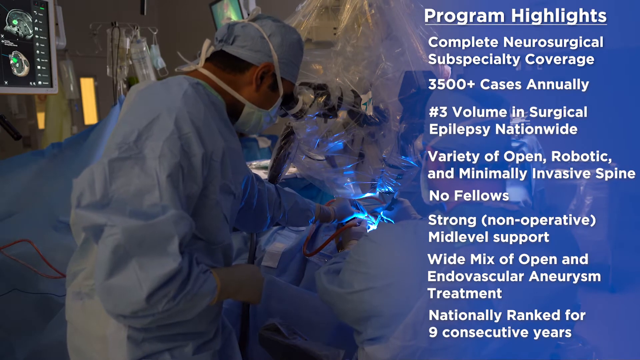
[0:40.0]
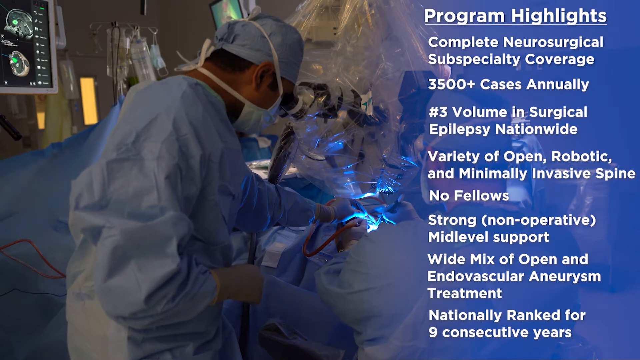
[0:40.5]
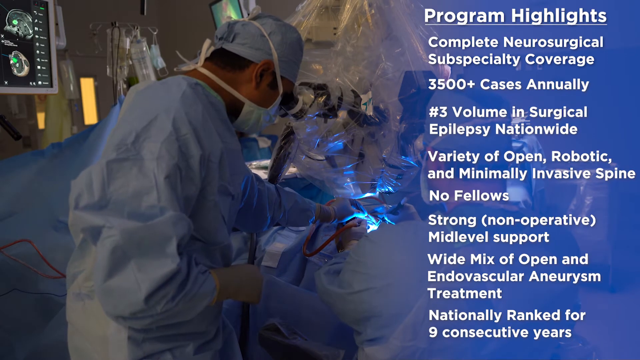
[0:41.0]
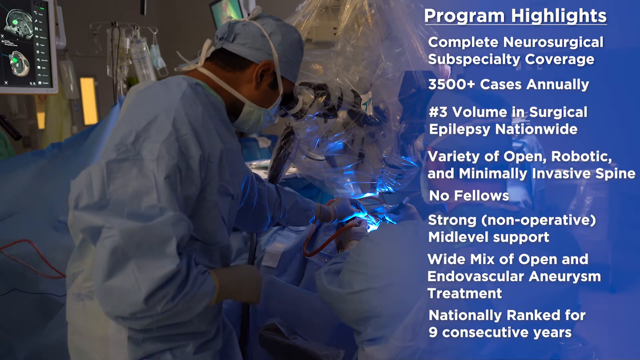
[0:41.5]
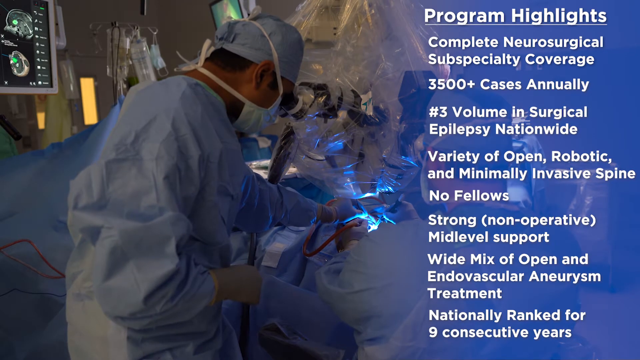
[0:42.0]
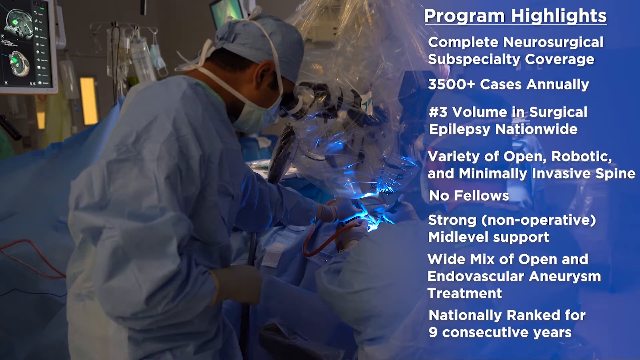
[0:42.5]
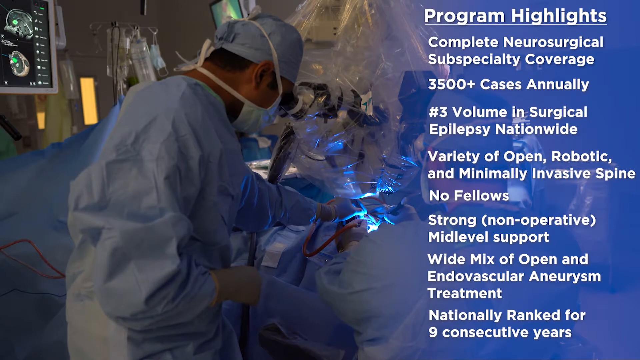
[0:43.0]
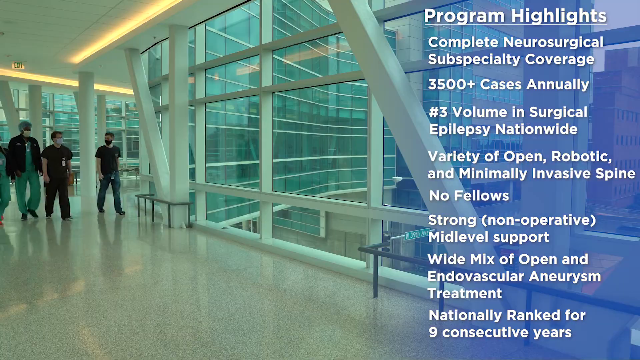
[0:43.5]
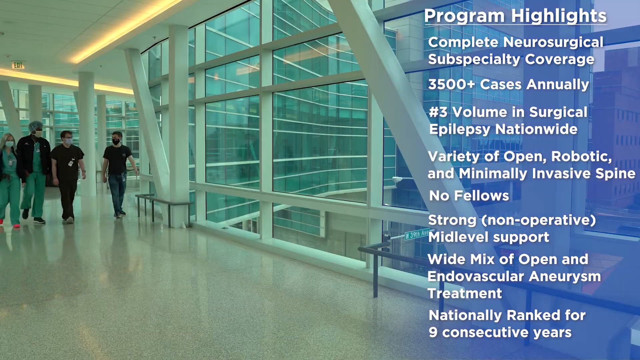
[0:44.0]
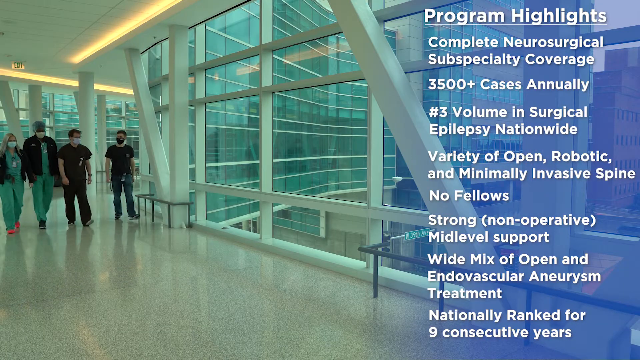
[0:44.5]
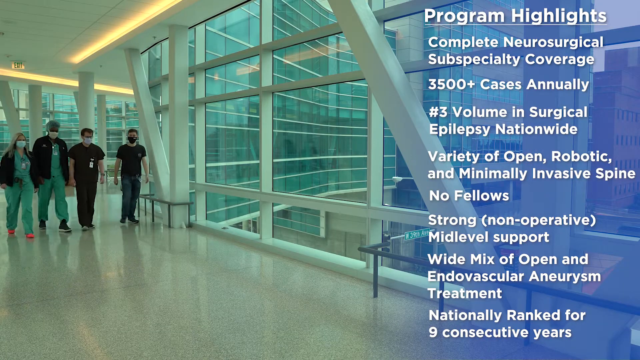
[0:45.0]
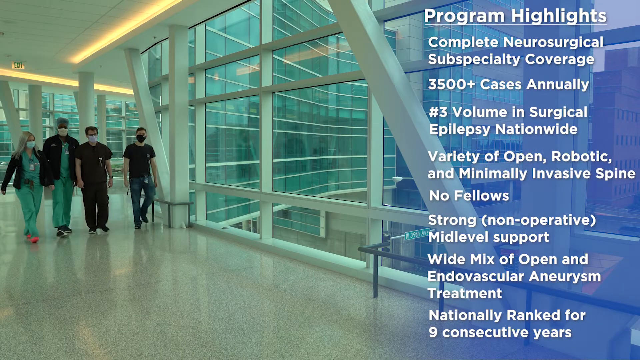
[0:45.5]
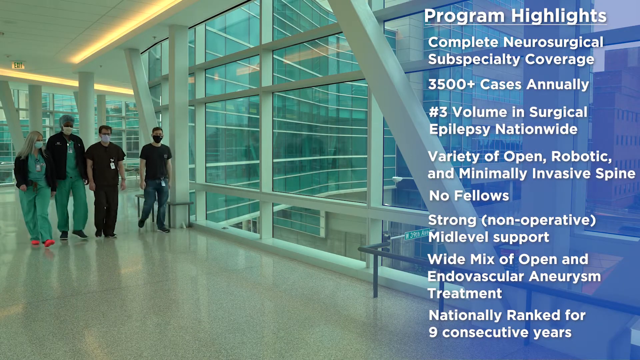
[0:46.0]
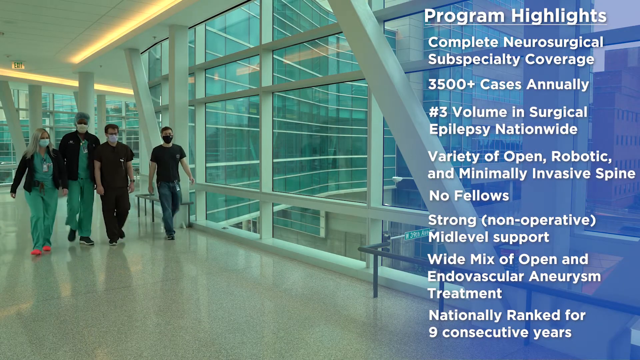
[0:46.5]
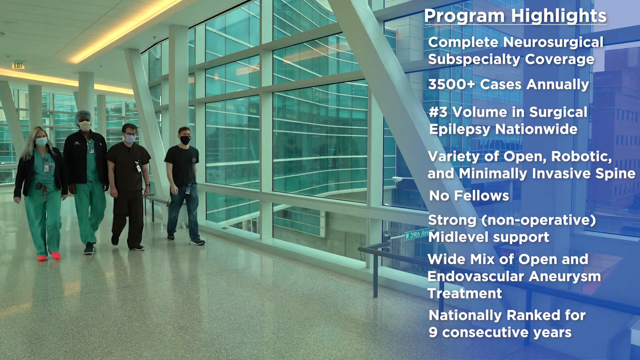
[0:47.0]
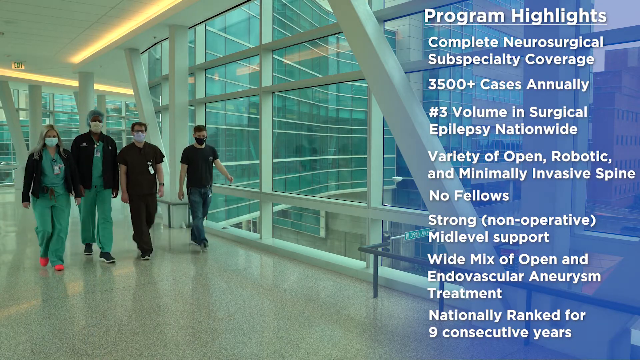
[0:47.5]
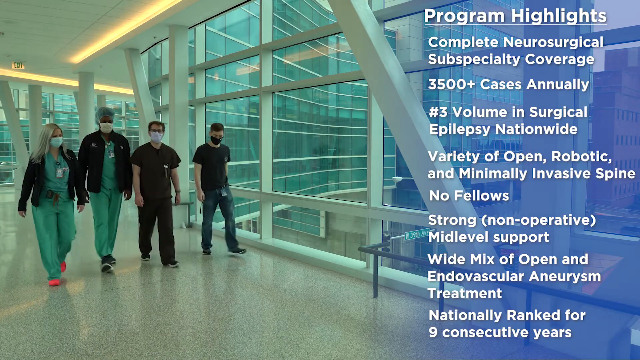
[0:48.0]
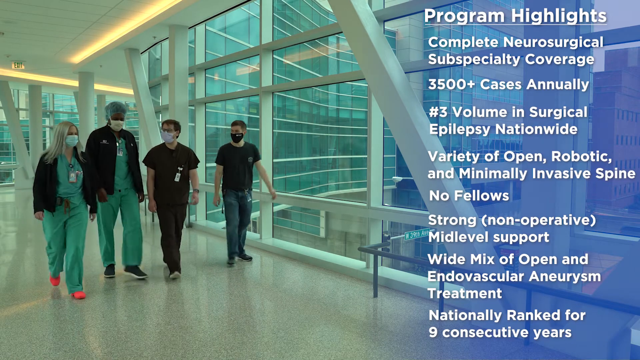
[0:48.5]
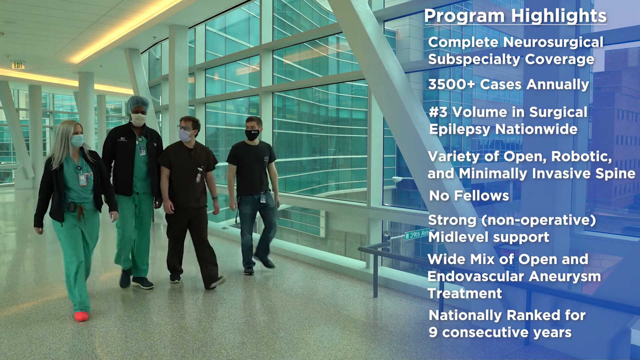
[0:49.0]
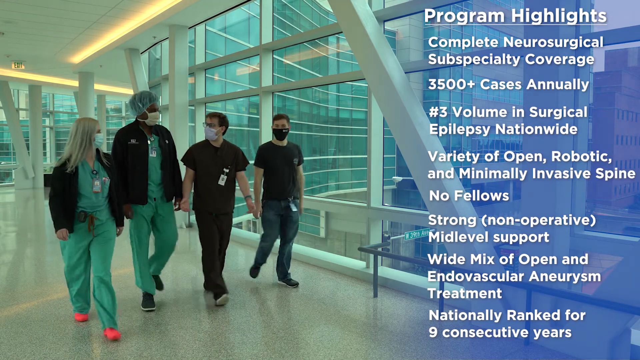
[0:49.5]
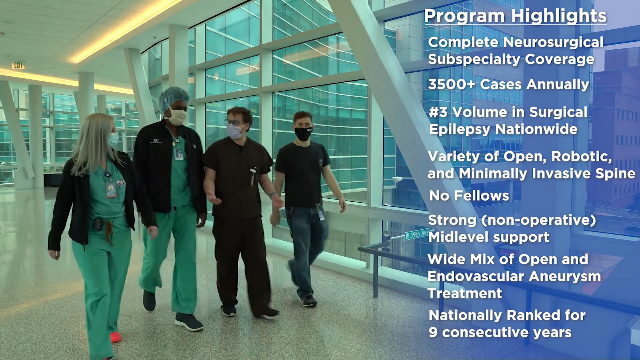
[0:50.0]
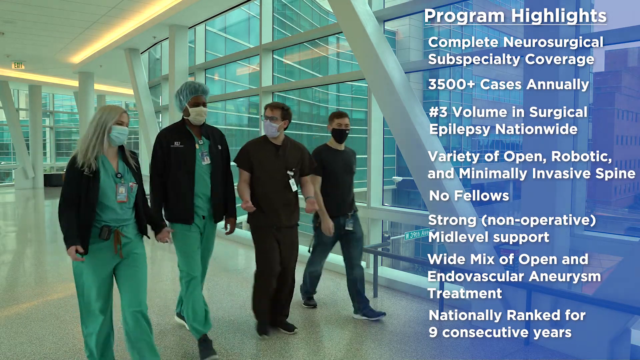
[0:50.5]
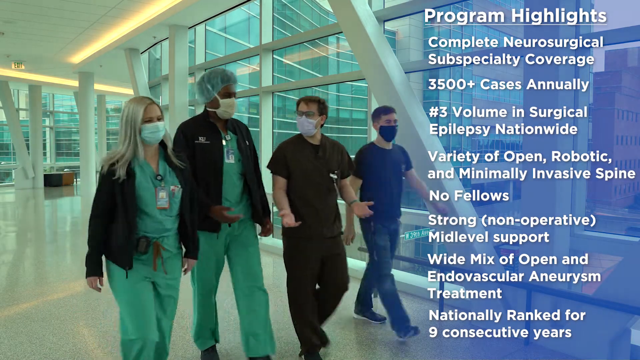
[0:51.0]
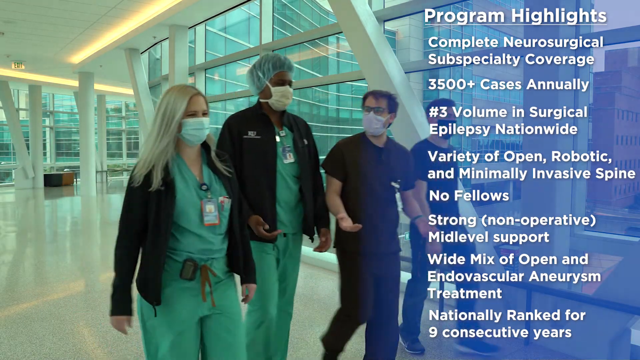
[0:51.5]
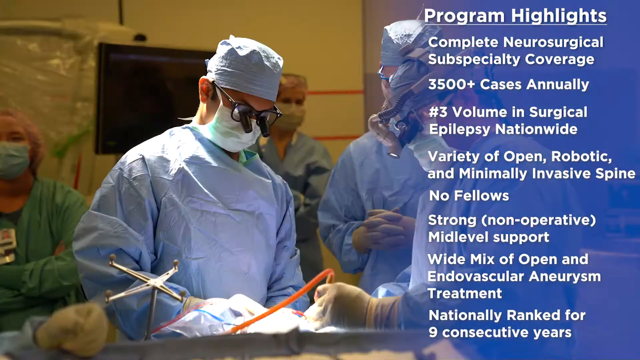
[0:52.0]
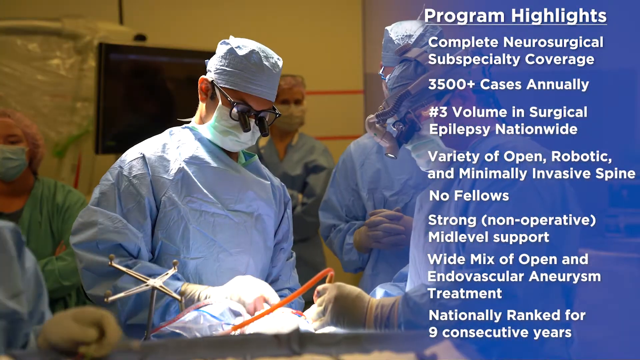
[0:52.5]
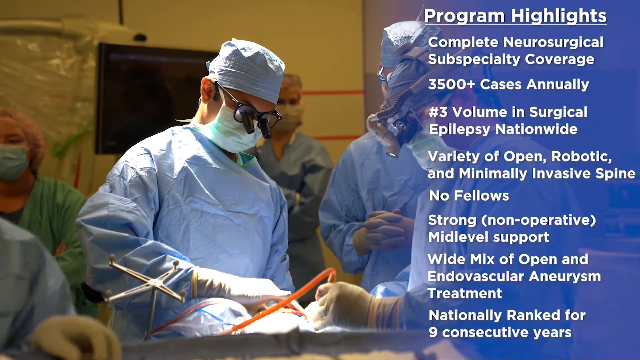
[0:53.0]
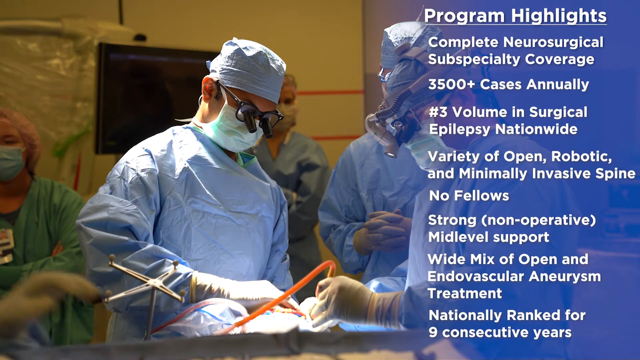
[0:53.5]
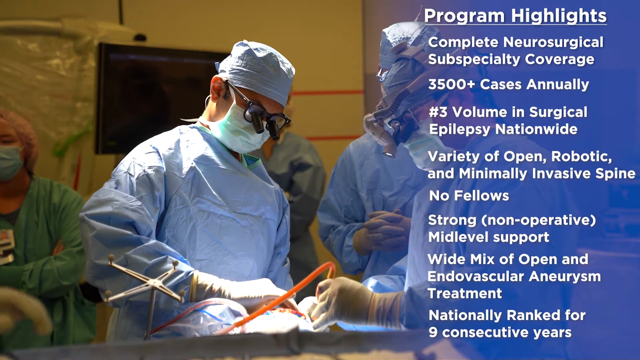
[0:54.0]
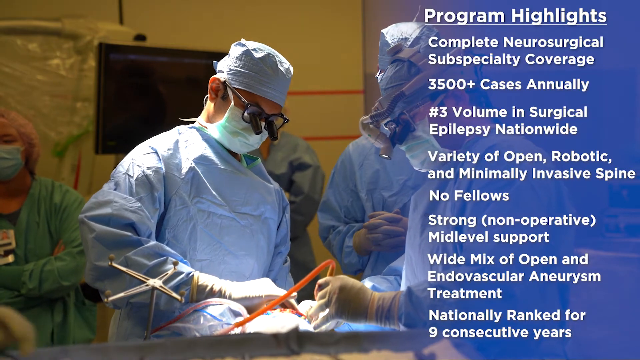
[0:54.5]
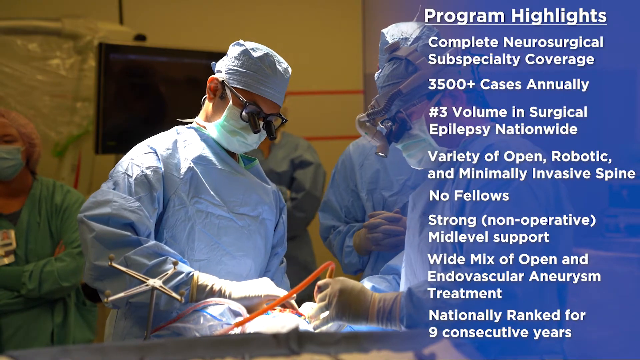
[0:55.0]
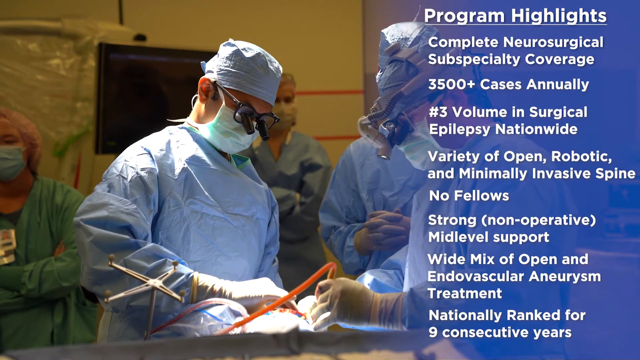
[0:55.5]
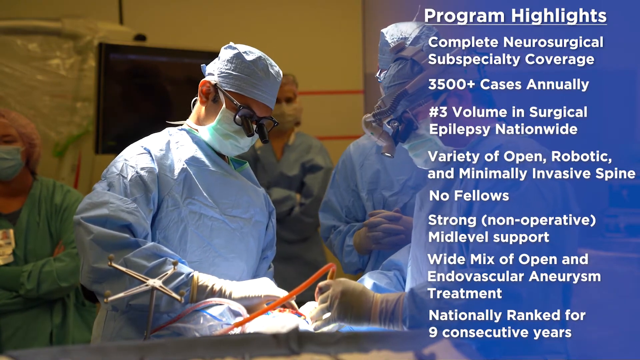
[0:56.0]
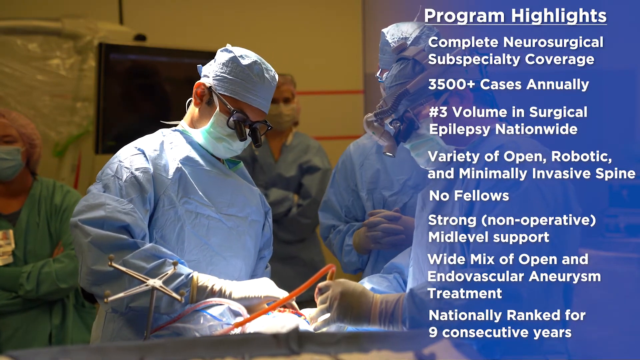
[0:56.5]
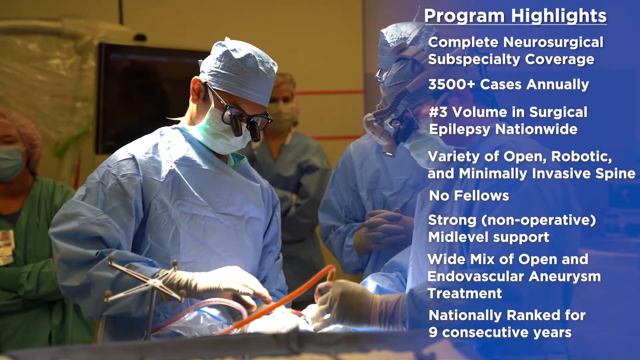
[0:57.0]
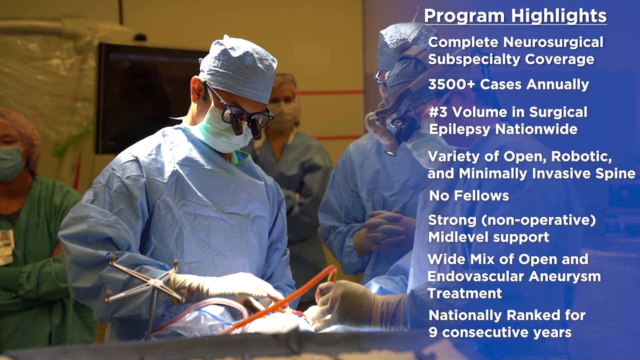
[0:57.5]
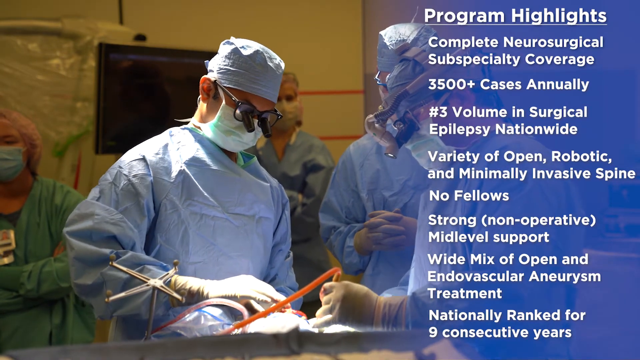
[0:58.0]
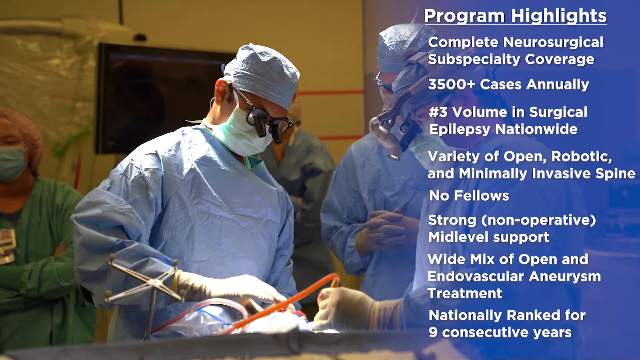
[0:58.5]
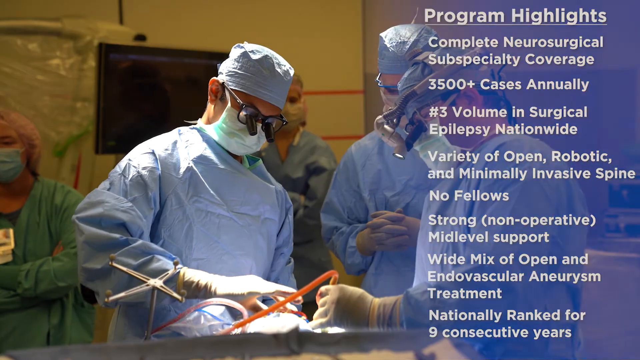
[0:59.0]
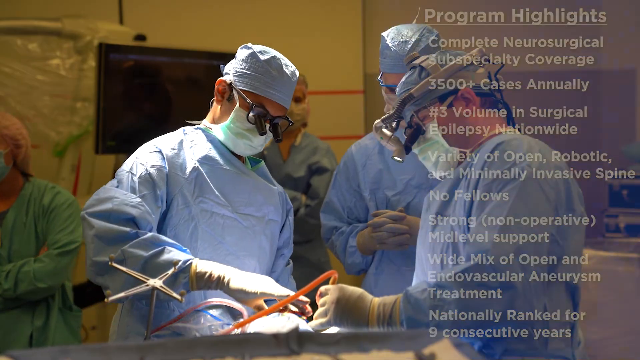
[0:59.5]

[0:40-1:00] A doctor in a light blue outfit, light blue hat, white mask and white gloves looks downwards to the right at a large sort of operating area. At the top right, white text reads "program highlights", with a number of highlights underneath. The doctor's left hand makes a sort of pinching motion on the operating table. Behind the program highlights text is another doctor, a white man with his back toward the camera, also operating on the table with both white-gloved hands. The scene changes to four people: a white woman with blonde hair on the far left, a large man to her right, and two shorter white men to the right. The two on the left wear sort of blue-greenish doctor's outfits; the two on the right are dressed more casually, one in a black shirt and black pants and the one on the far right in a black shirt and blue pants. They walk from the left middle of the frame toward the bottom right in a sort of diagonal formation, and the woman sort of raises her hands as they talk to each other. The scene changes back to the operating room, where three doctors in the middle, in light blue outfits, look downwards as they move their hands around the bottom of the table. The doctor on the far right holds some type of orange device with a very large orange cable.